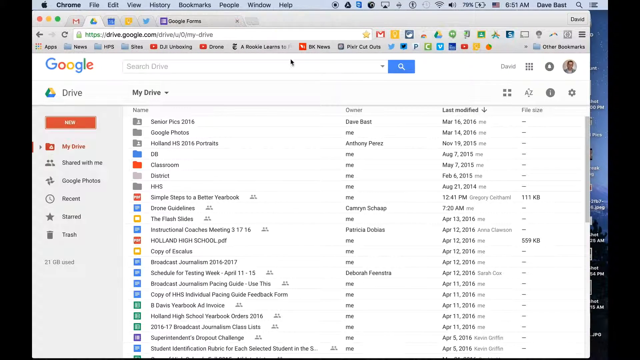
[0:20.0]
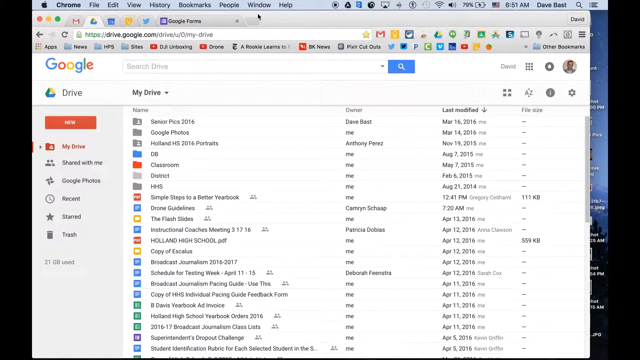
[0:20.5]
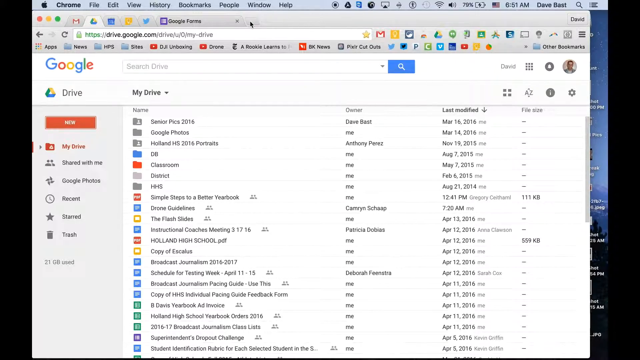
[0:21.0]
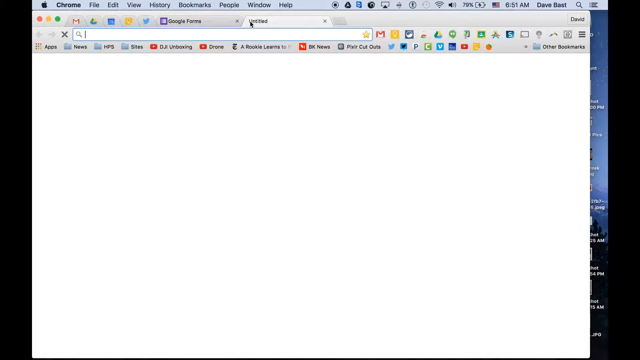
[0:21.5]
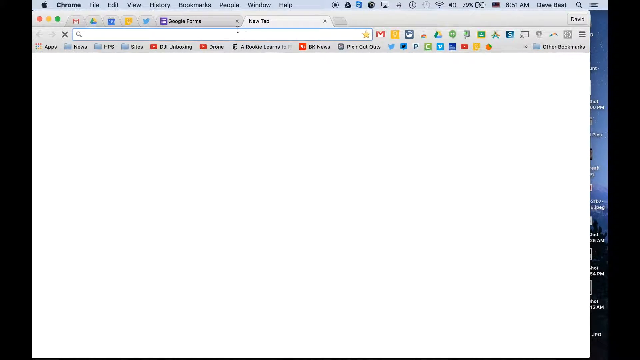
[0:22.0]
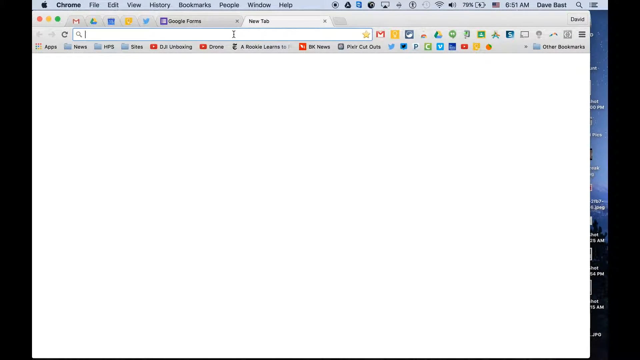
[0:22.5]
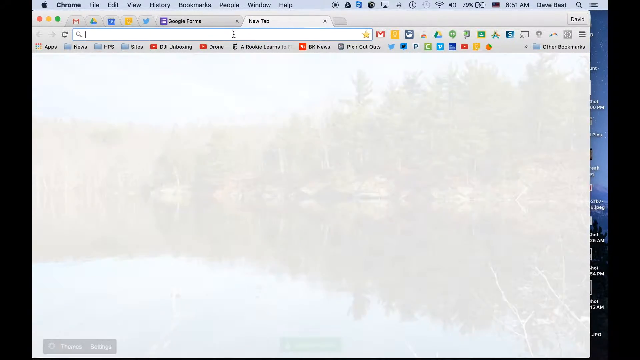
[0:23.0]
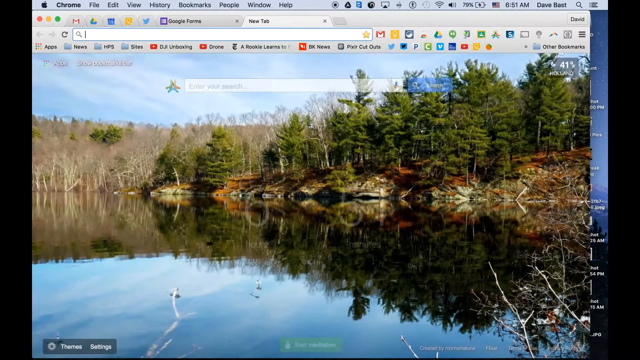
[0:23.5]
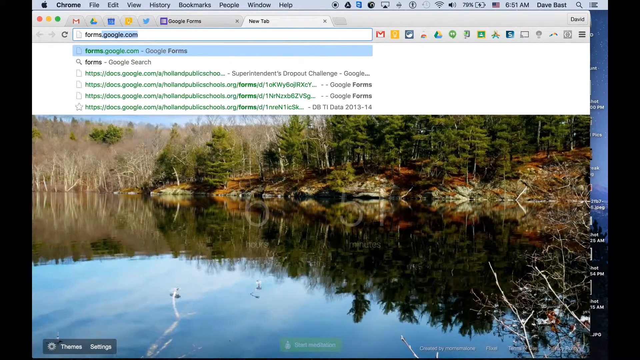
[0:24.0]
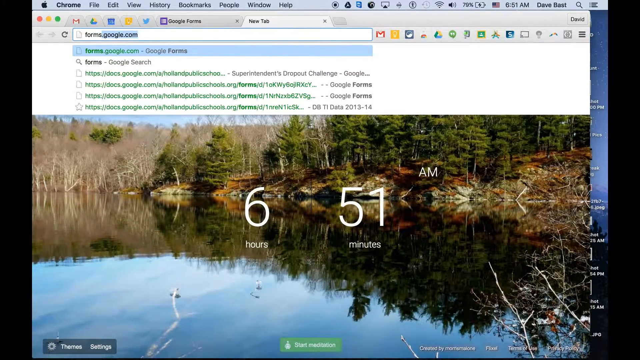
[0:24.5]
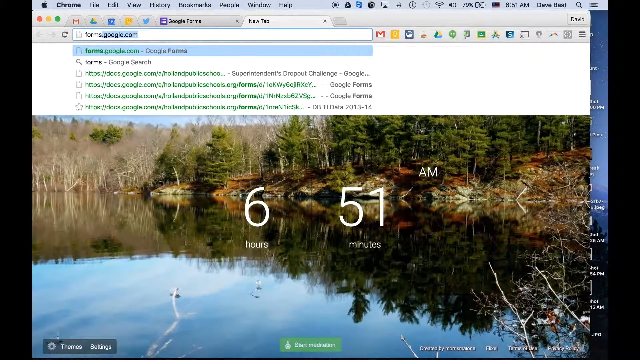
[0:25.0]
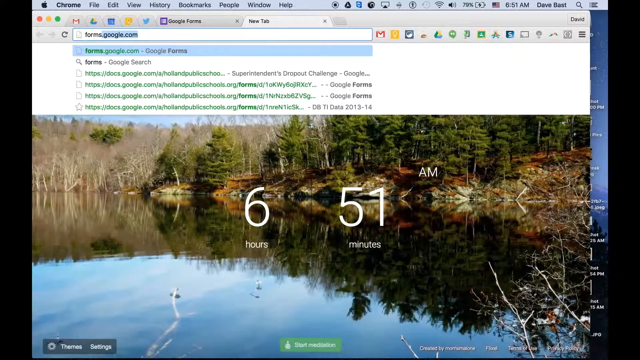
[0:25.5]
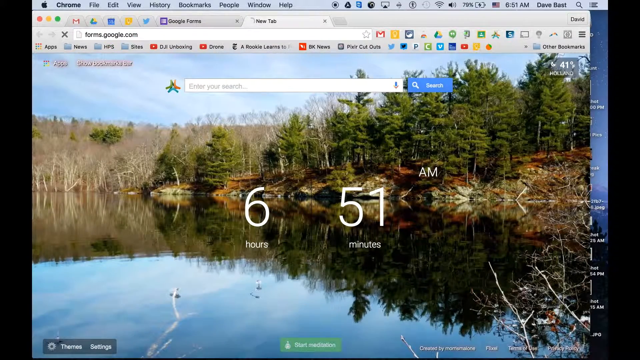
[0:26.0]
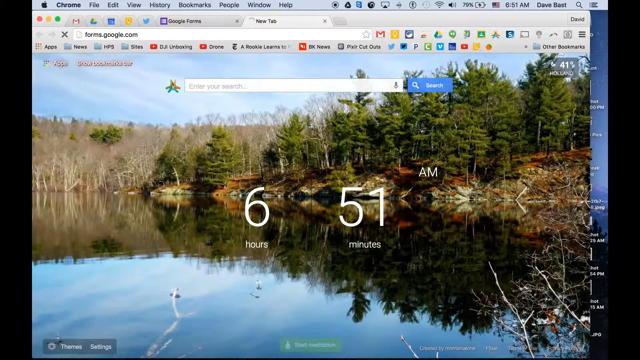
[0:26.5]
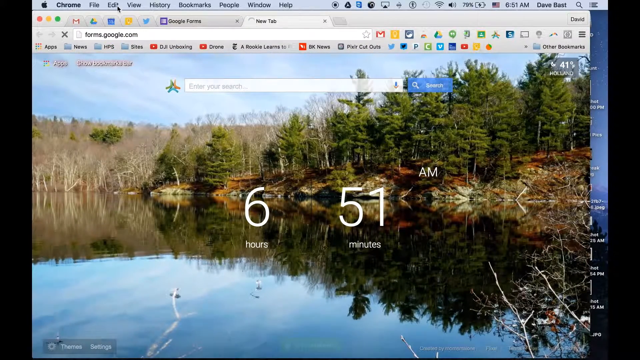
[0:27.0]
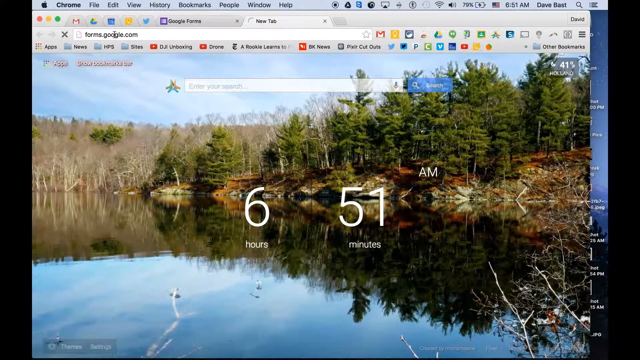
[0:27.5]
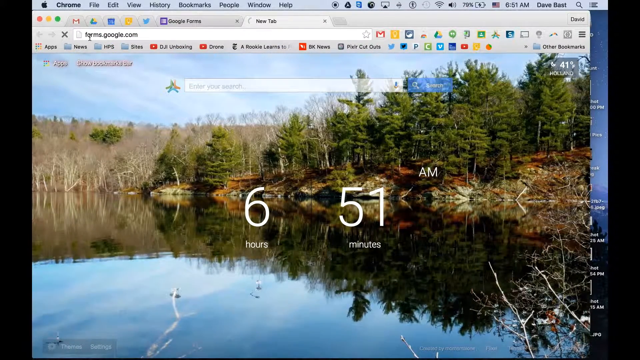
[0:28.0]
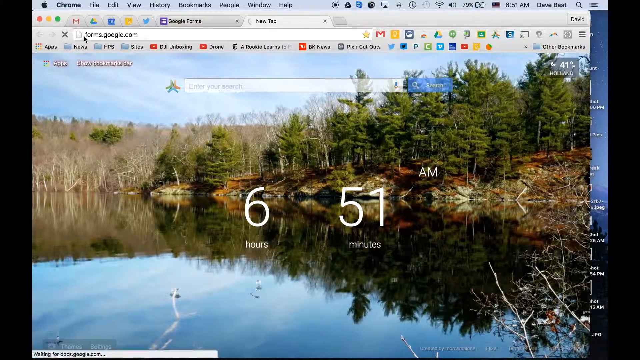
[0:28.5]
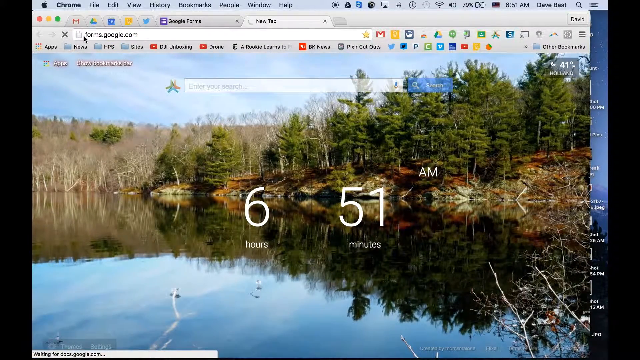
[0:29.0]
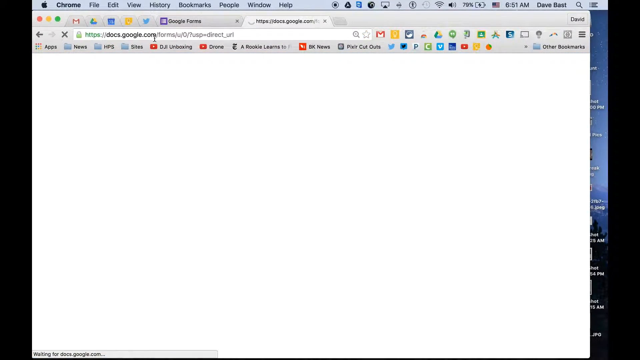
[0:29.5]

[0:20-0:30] The person starts at Google Drive, on the Drive page, and clicks to open a new tab at the top. It looks like a Mac version of Chrome. The new tab looks like a home page, possibly Bing or something similar. From that new tab, they type the web address forms.google.com directly. The screen is very busy, with many files and bookmarks, and multiple tabs are open at the top, including Chrome, Gmail, Drive, Twitter, maybe Excel or Calendar, and Notification or Reminders. After typing the address, they highlight the URL with the mouse while the site loads; it eventually loads and the scene stops quite abruptly.